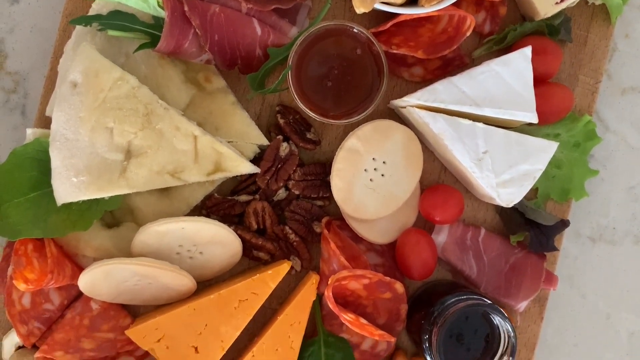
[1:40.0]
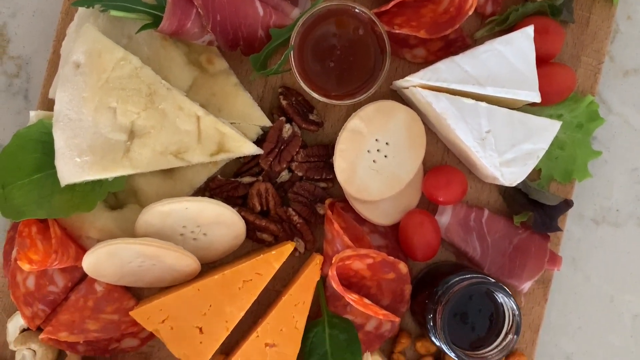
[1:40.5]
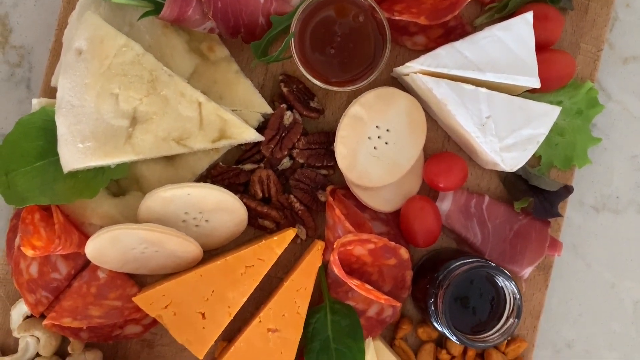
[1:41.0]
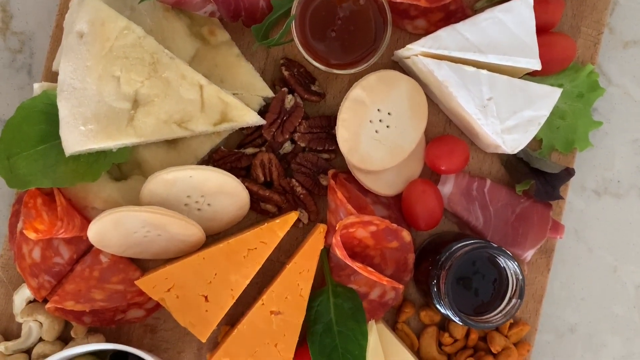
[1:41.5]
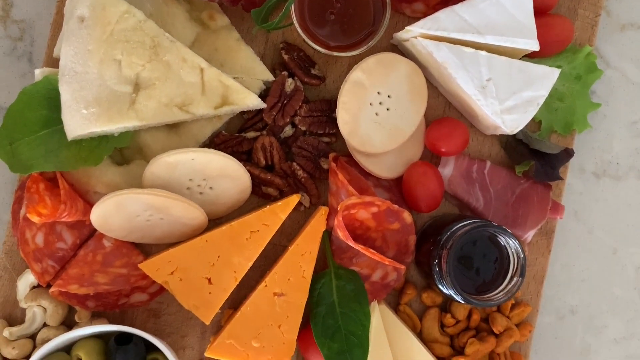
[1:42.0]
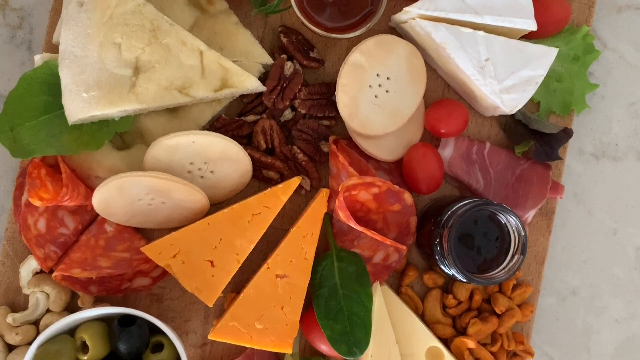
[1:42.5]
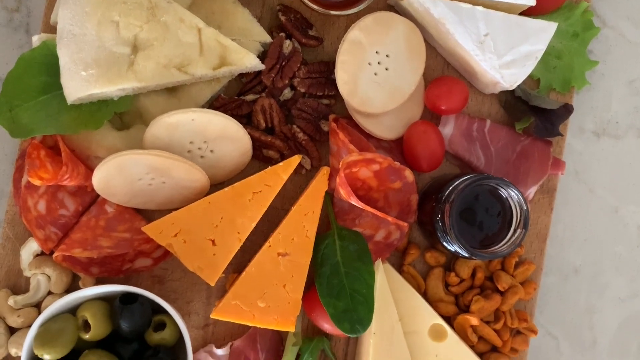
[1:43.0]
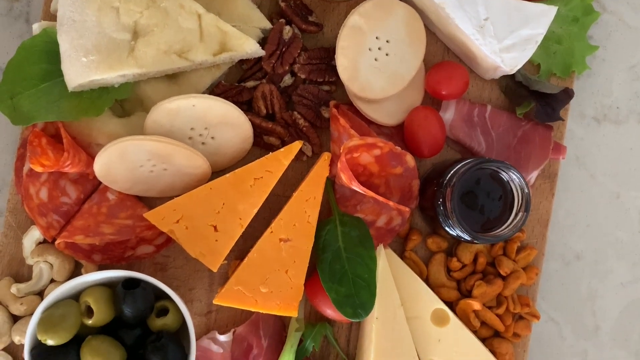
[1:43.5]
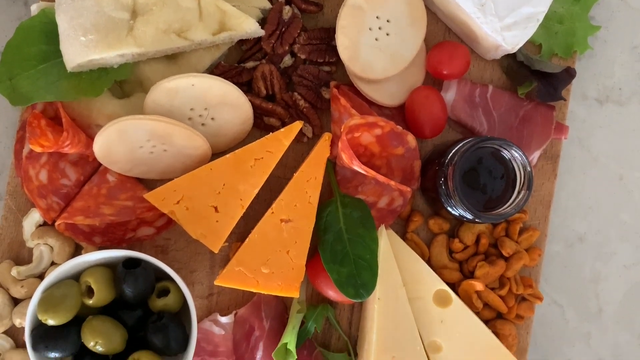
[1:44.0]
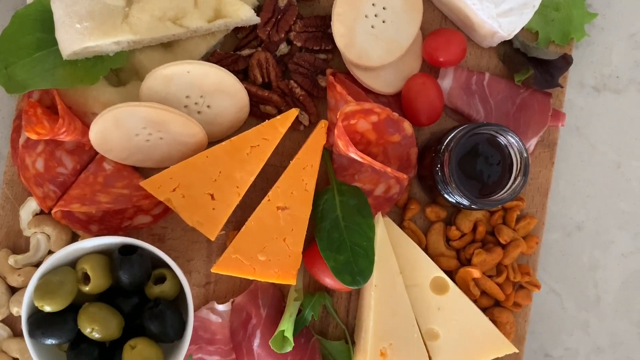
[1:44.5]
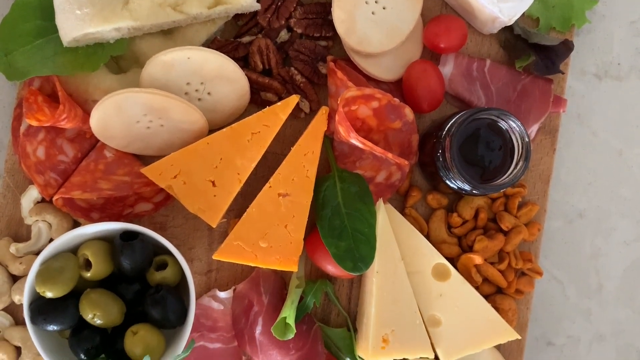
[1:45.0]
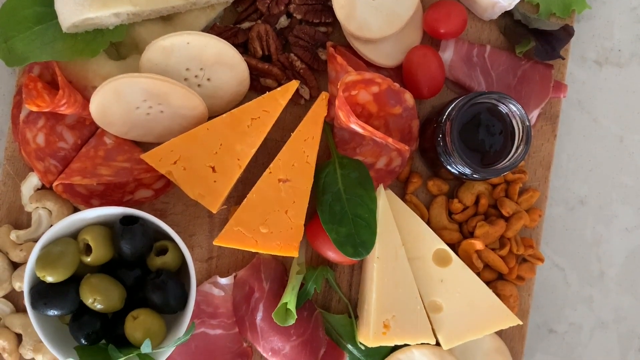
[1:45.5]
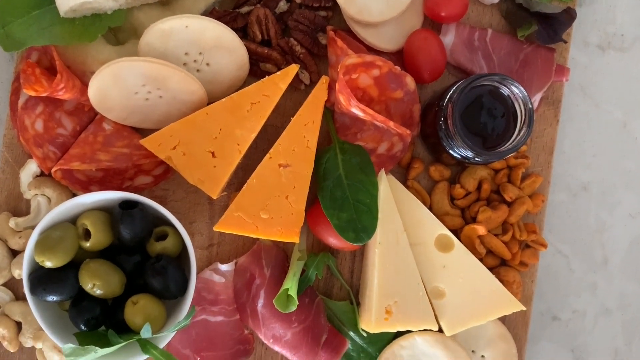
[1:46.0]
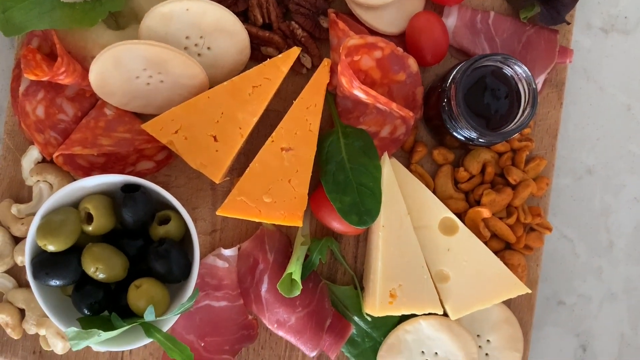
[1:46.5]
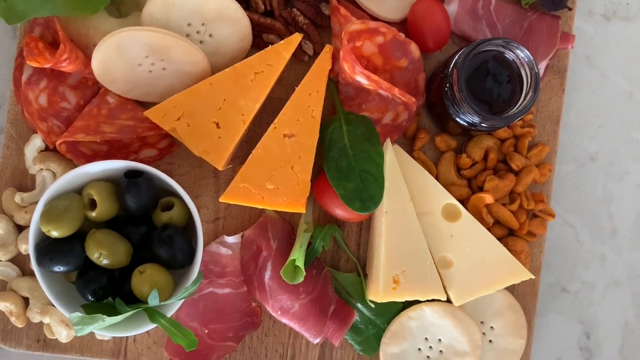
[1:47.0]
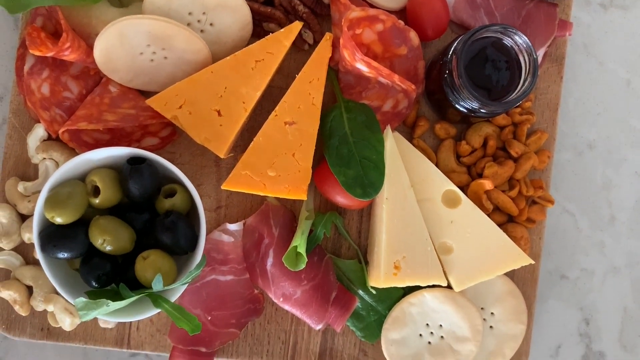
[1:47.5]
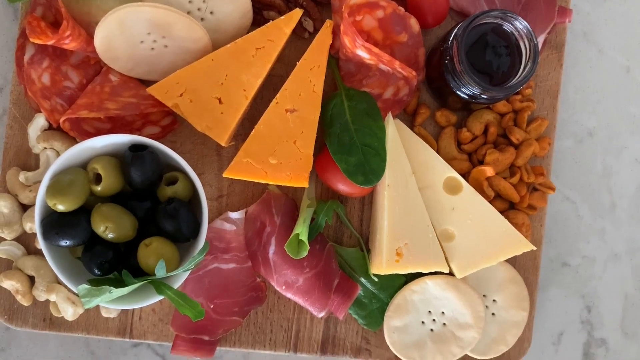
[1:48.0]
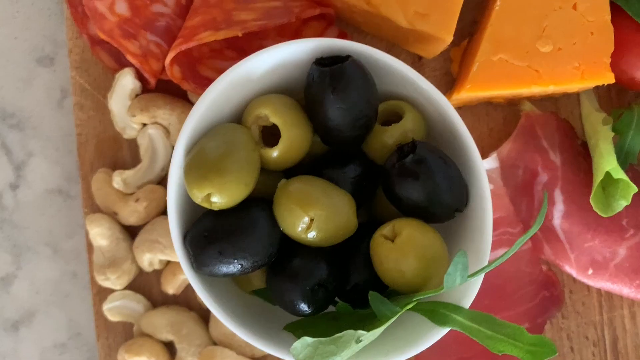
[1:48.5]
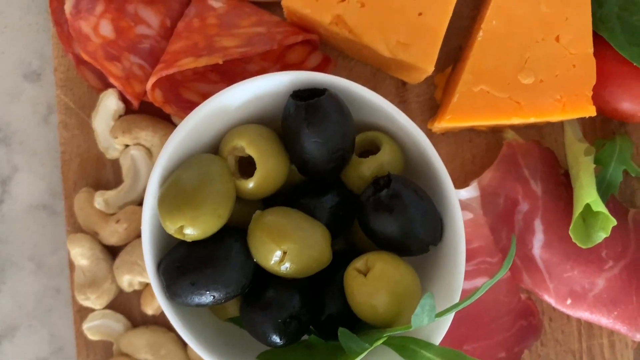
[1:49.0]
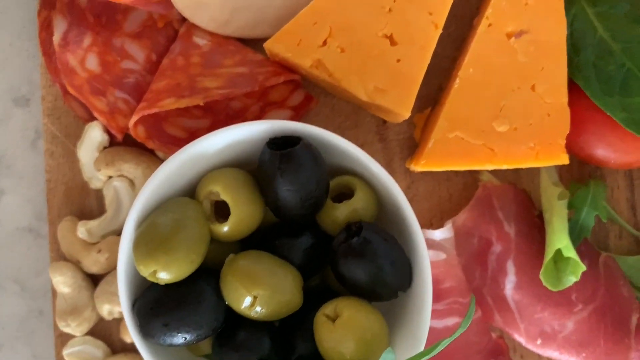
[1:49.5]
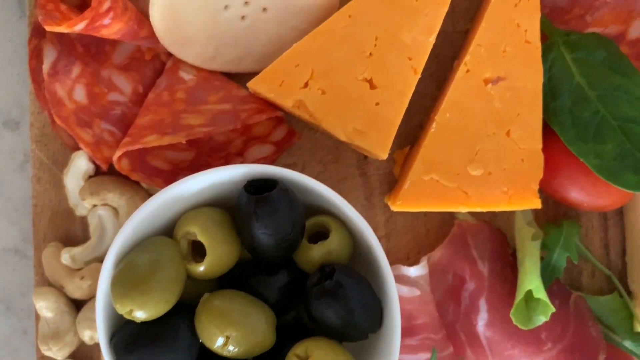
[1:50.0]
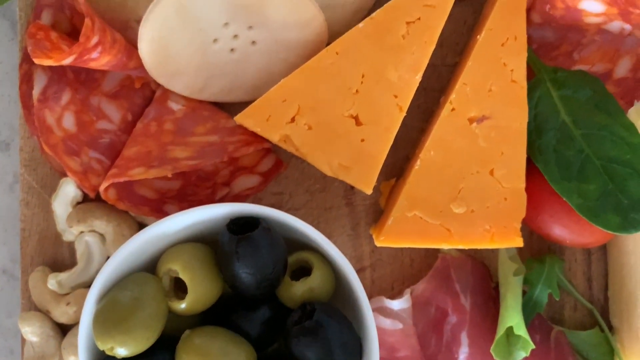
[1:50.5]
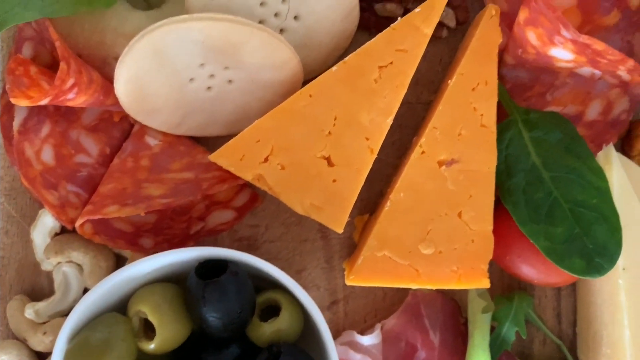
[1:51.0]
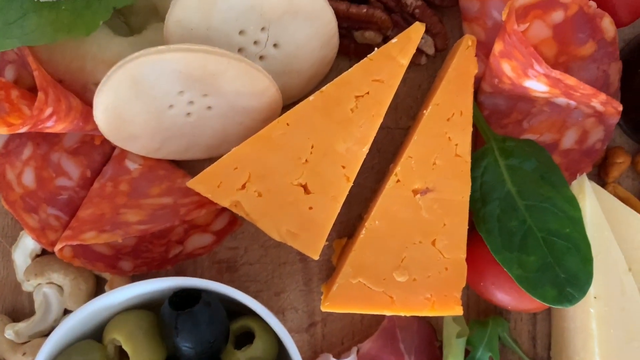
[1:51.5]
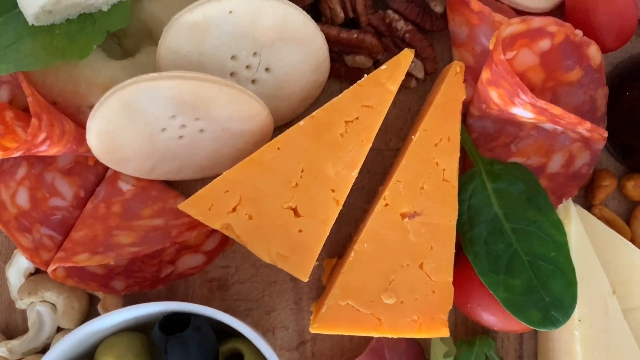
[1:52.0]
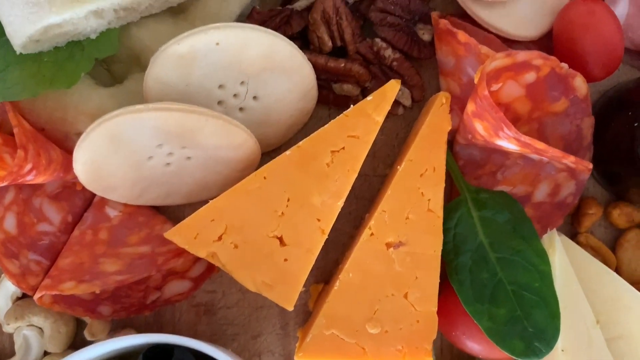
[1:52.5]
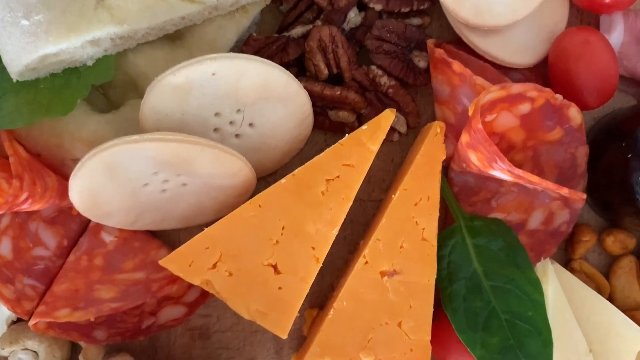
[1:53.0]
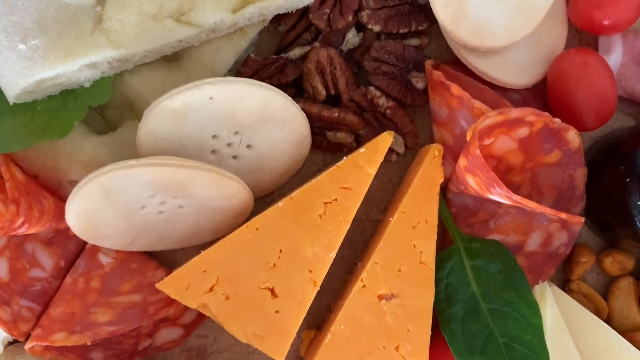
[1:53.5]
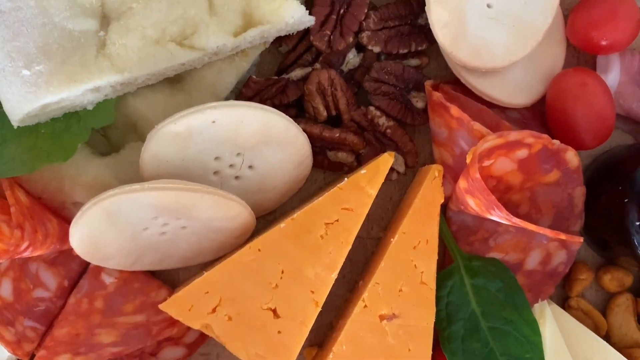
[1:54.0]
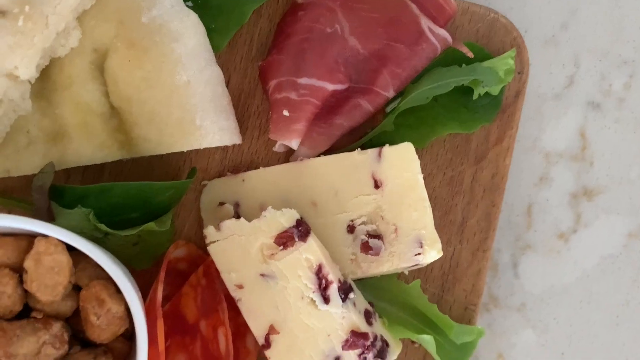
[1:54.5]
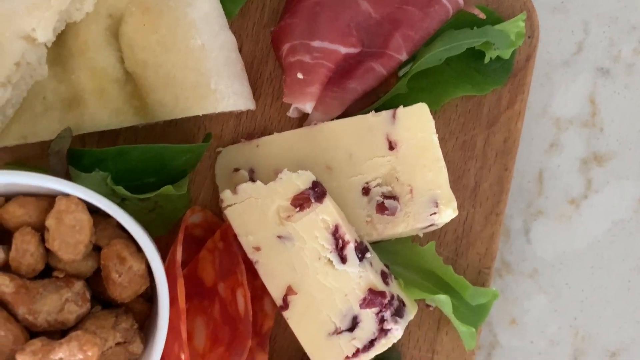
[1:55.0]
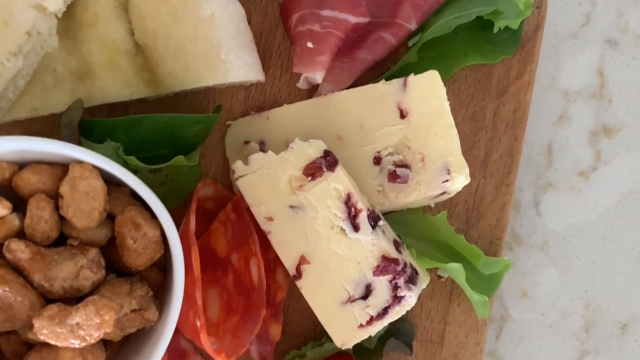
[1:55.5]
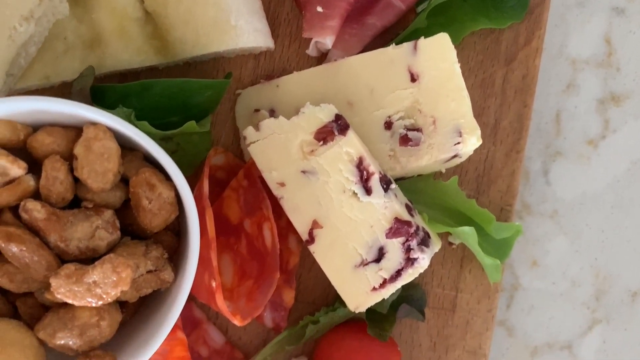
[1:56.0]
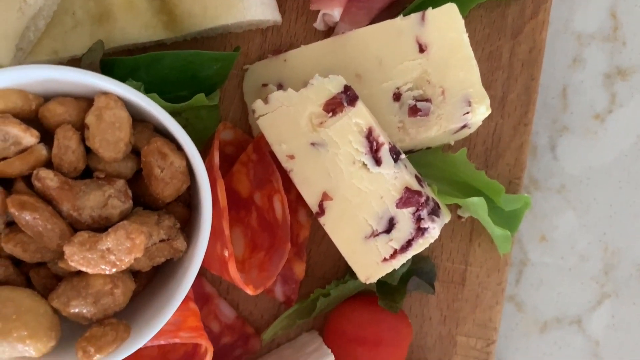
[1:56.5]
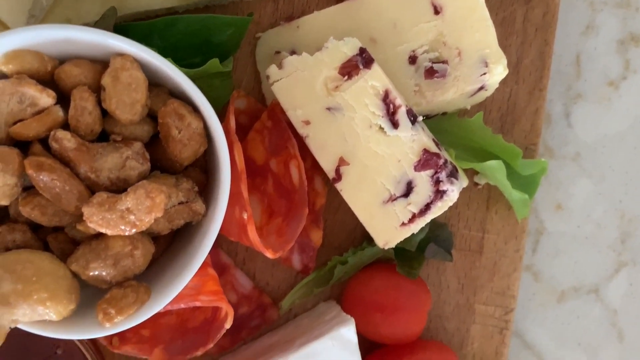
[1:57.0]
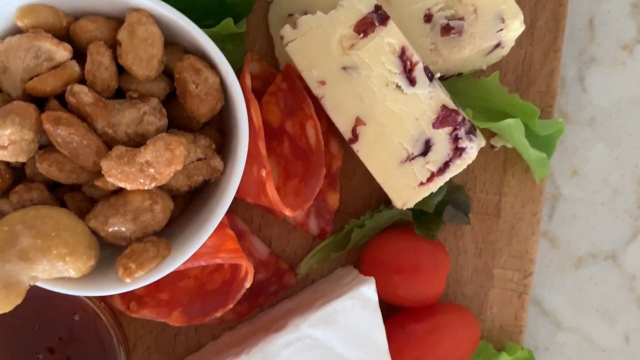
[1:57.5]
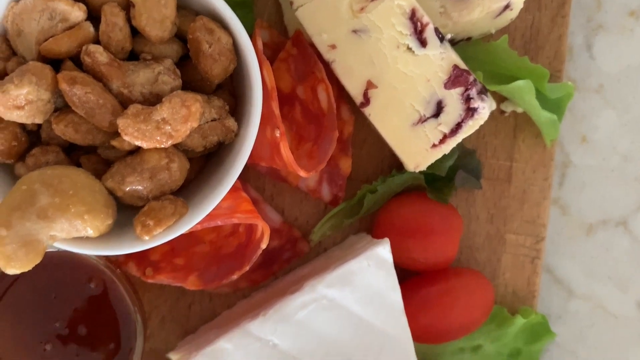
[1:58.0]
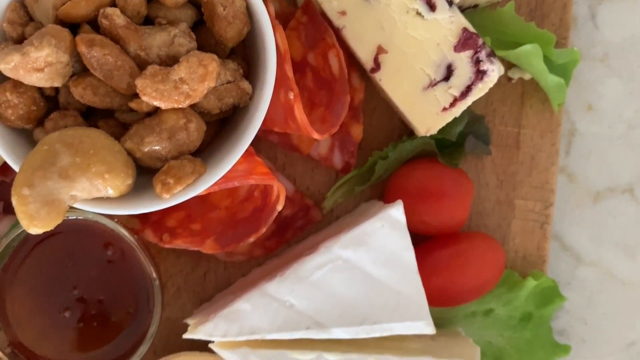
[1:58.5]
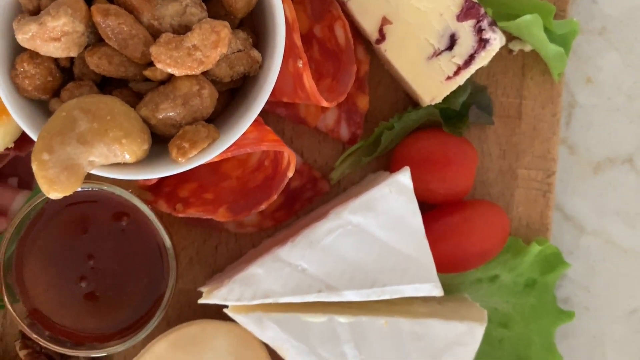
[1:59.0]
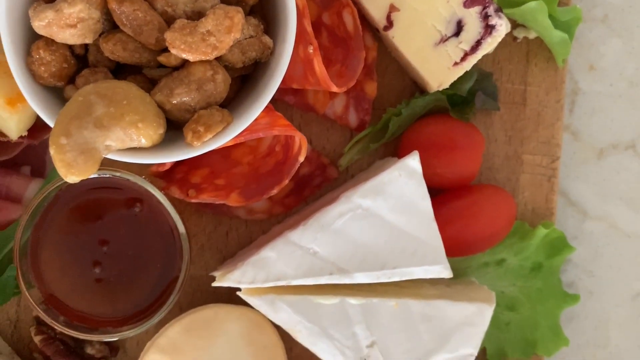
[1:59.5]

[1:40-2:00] Up close and zoomed in, the items on the large brown cutting board are shown as the camera pans over the board. Some of the cheeses are yellow, some white, and some look tan to light brown. There are many types of deli meat, some of which look like pastrami, salami, or turkey and ham. There are not many vegetables, but there are small tomatoes about the size of cherry or grape tomatoes. Olives are in a small dipping cup, and green lettuce is placed around the cutting board as garnish.